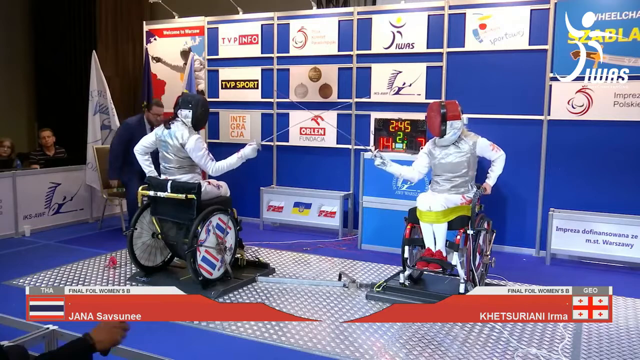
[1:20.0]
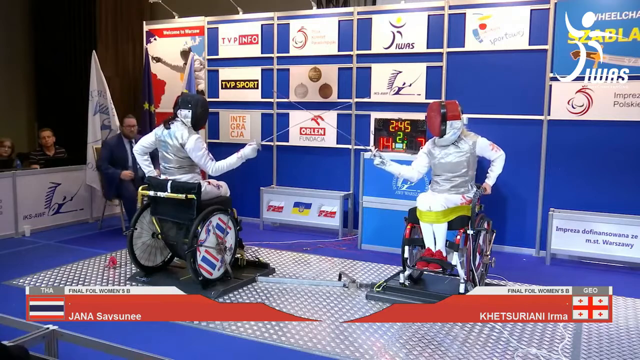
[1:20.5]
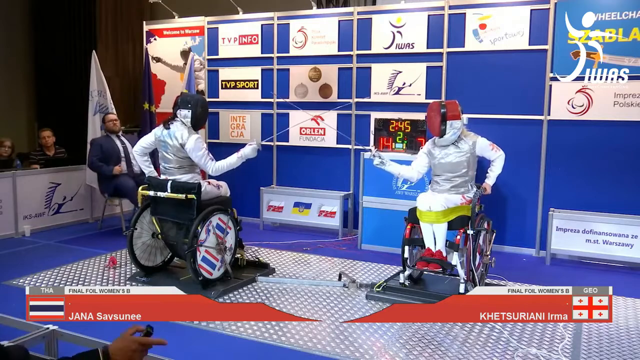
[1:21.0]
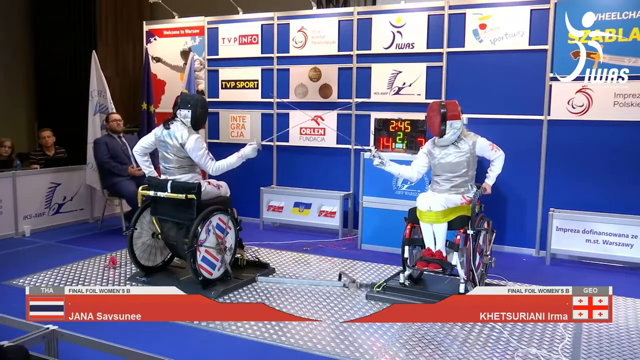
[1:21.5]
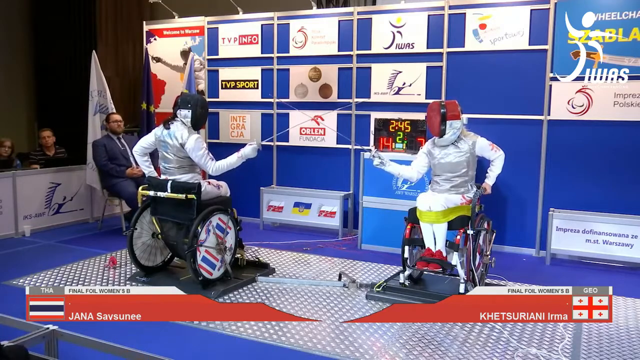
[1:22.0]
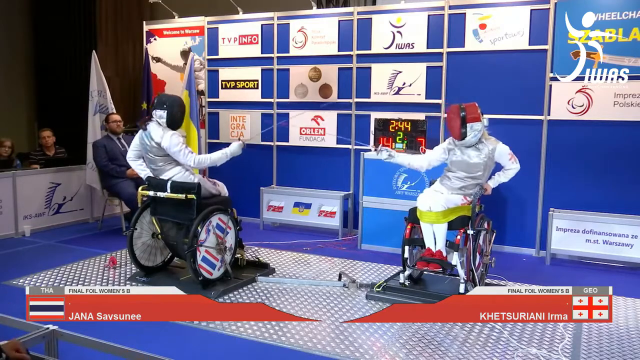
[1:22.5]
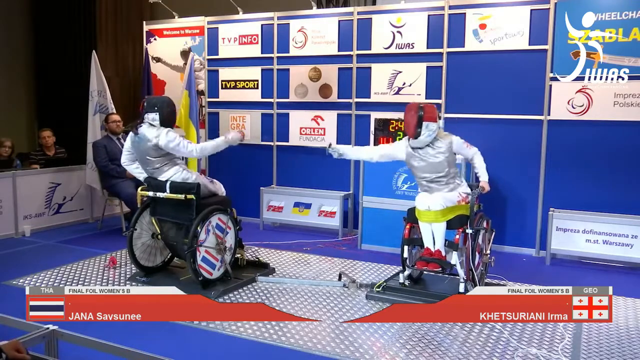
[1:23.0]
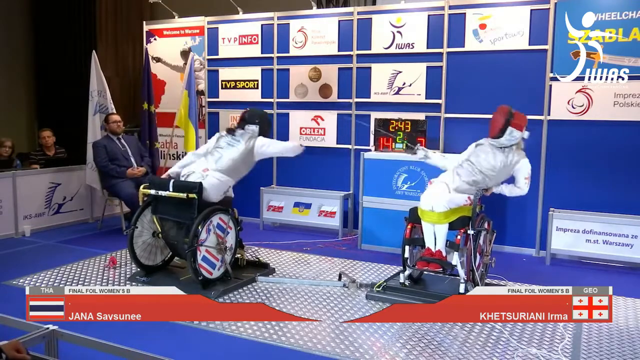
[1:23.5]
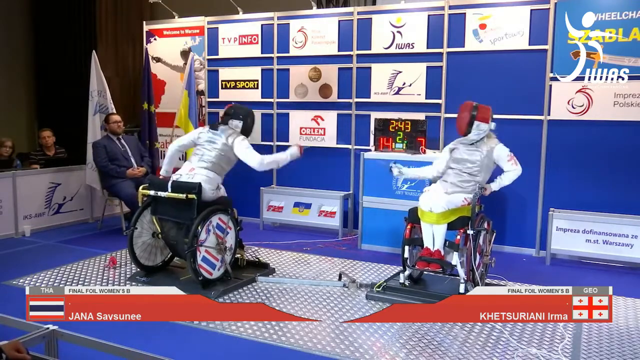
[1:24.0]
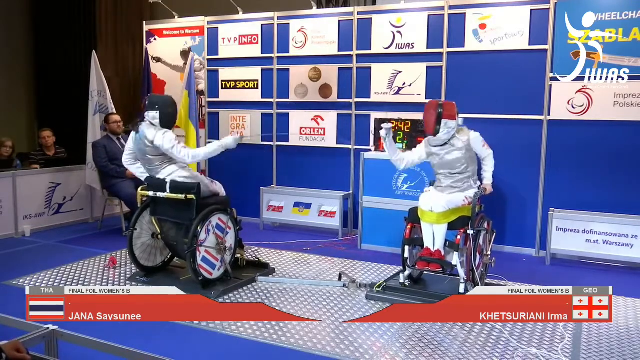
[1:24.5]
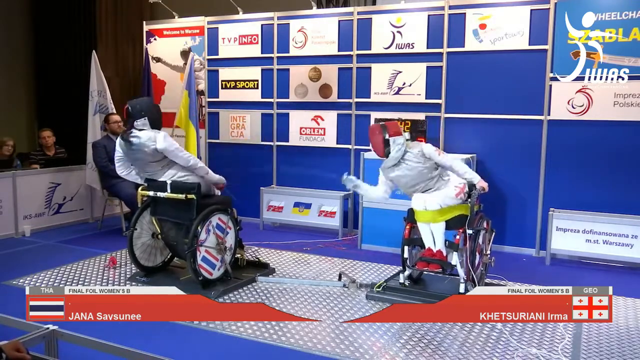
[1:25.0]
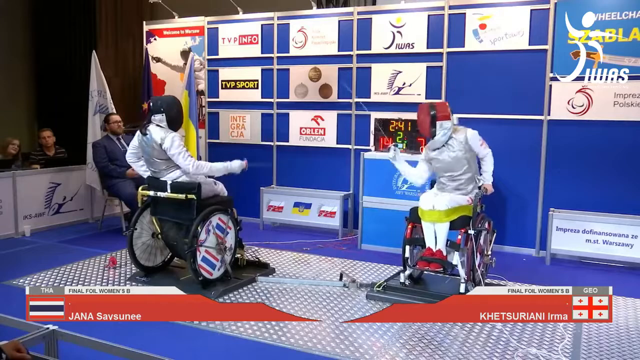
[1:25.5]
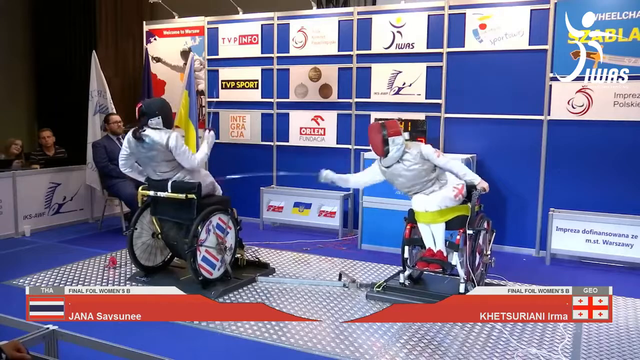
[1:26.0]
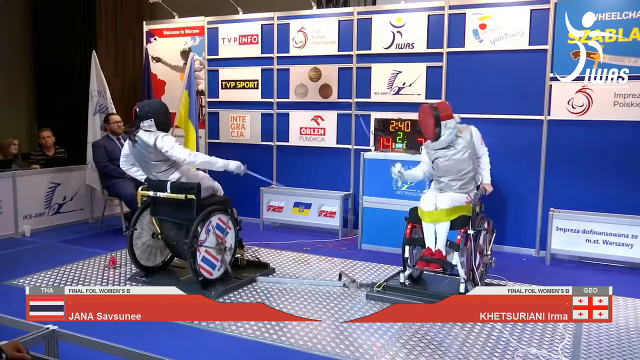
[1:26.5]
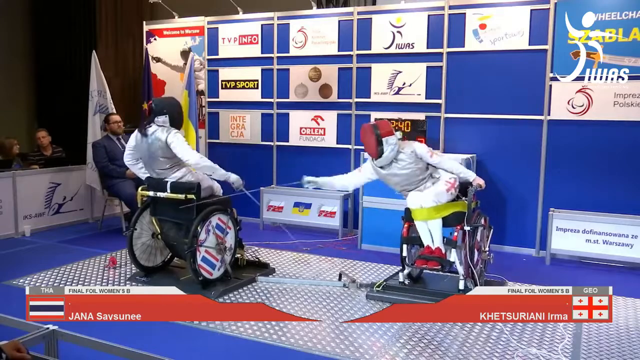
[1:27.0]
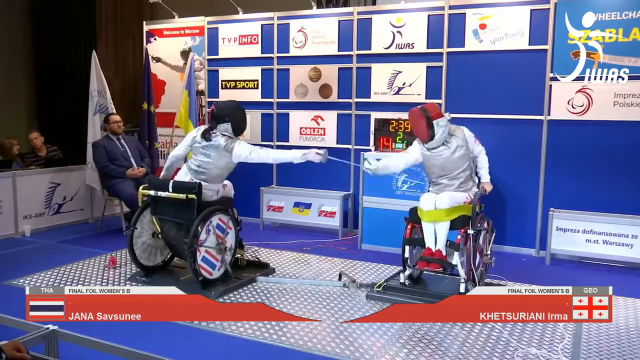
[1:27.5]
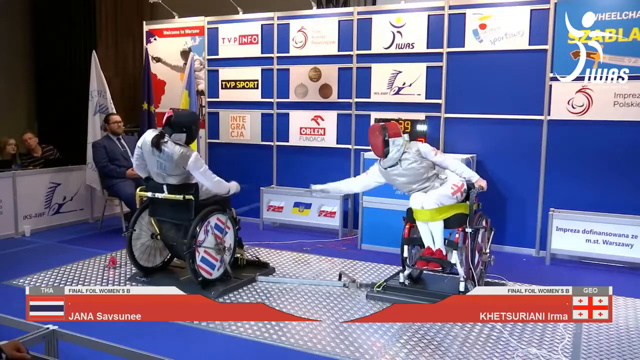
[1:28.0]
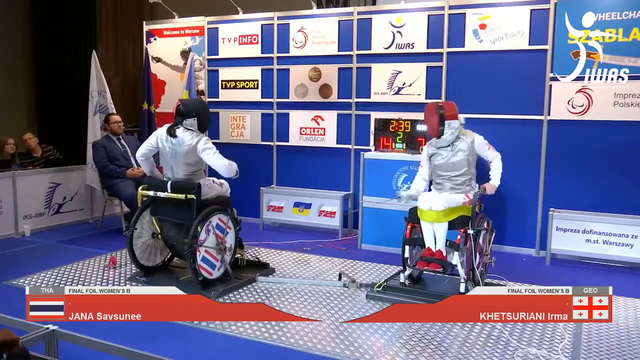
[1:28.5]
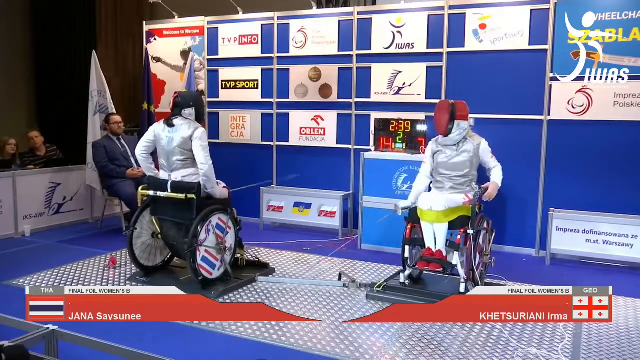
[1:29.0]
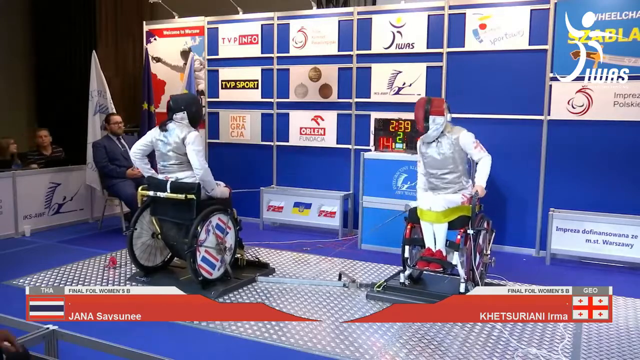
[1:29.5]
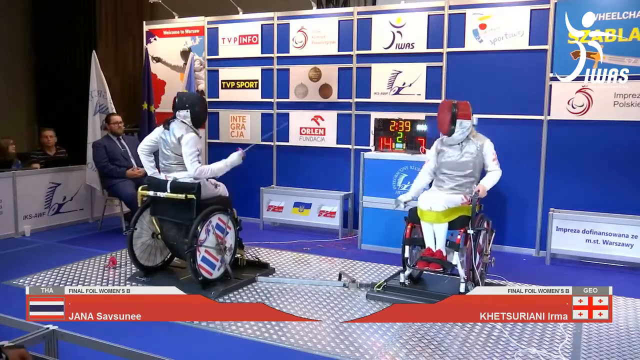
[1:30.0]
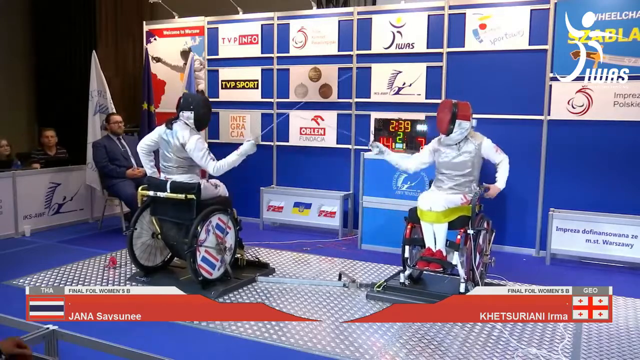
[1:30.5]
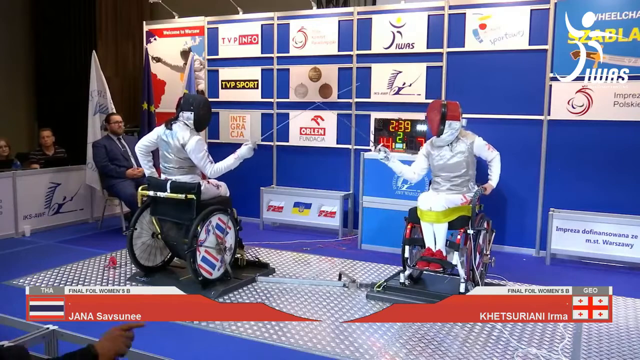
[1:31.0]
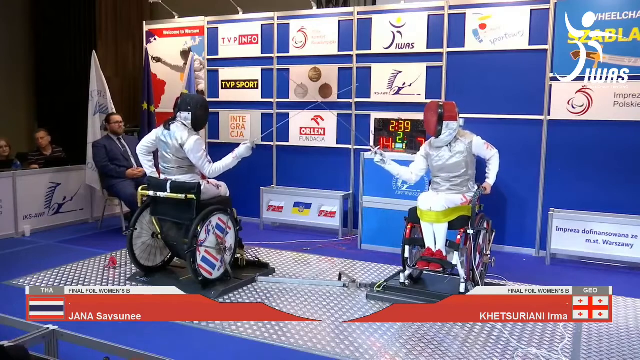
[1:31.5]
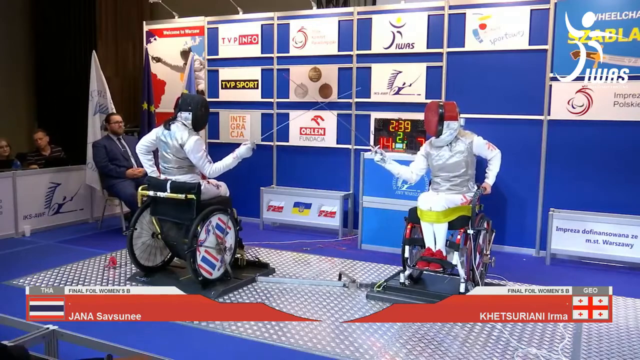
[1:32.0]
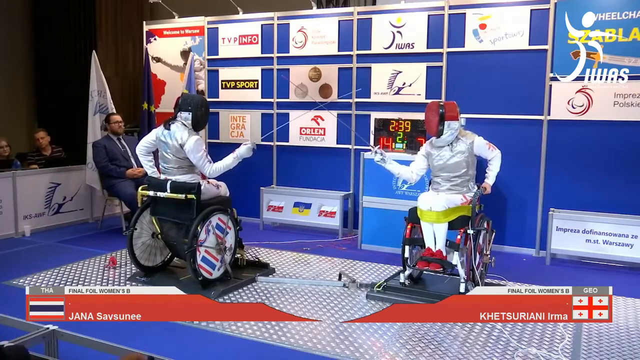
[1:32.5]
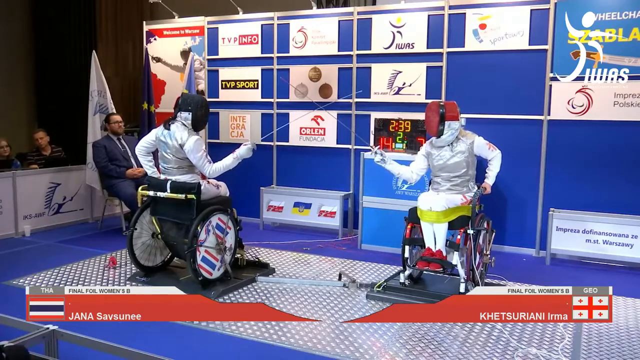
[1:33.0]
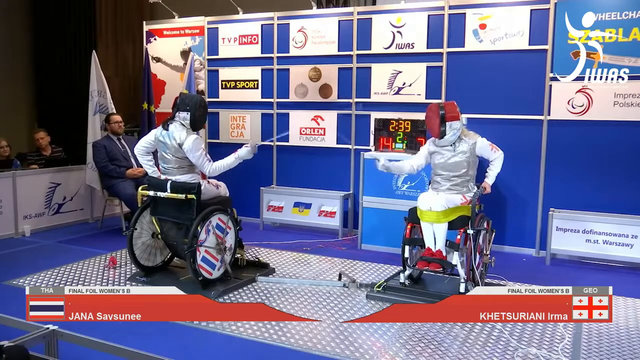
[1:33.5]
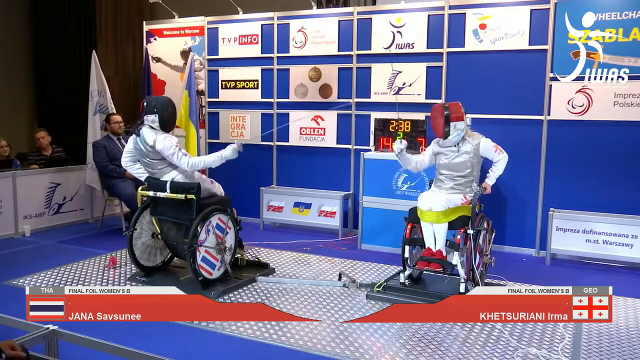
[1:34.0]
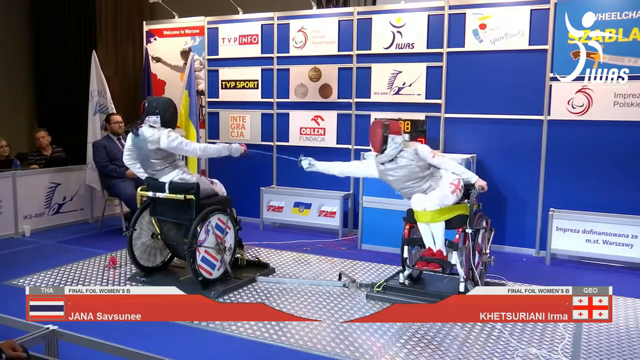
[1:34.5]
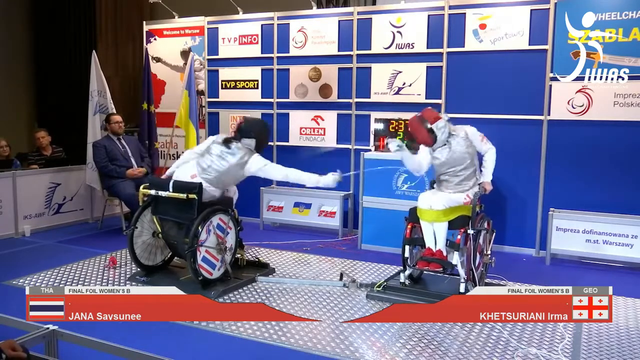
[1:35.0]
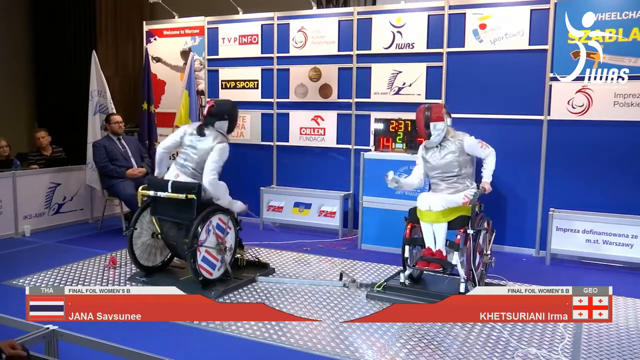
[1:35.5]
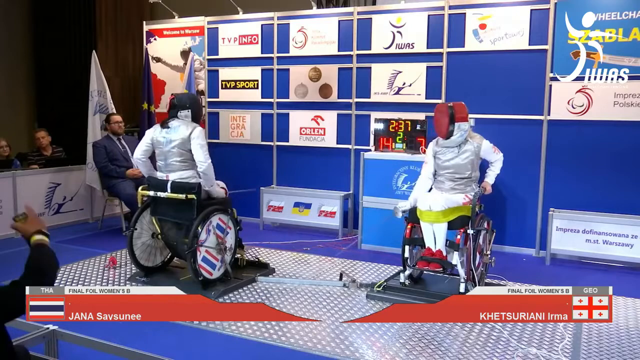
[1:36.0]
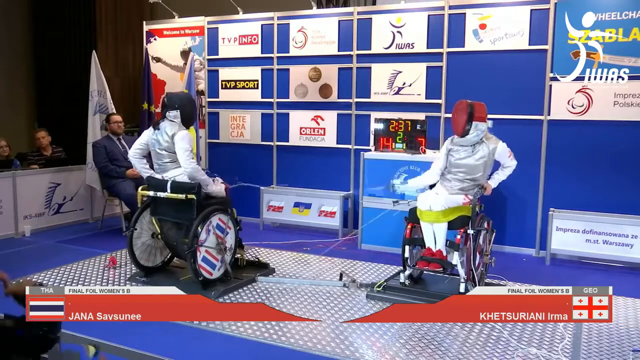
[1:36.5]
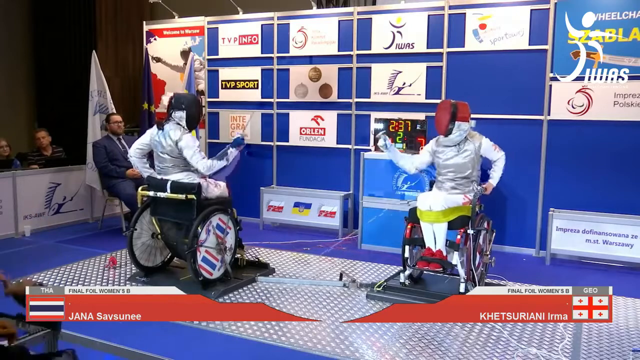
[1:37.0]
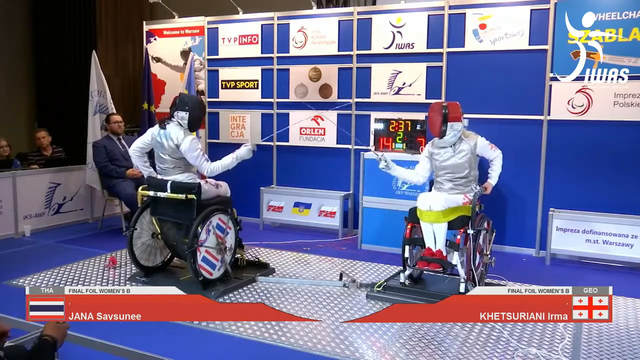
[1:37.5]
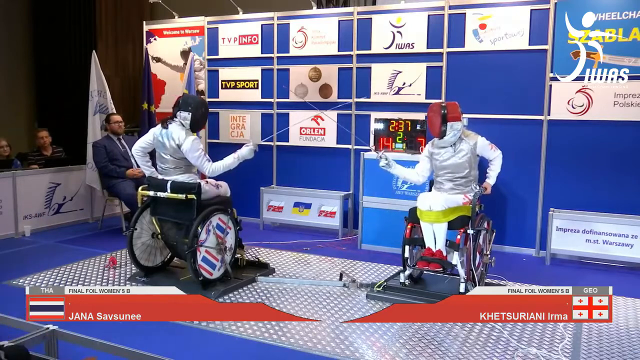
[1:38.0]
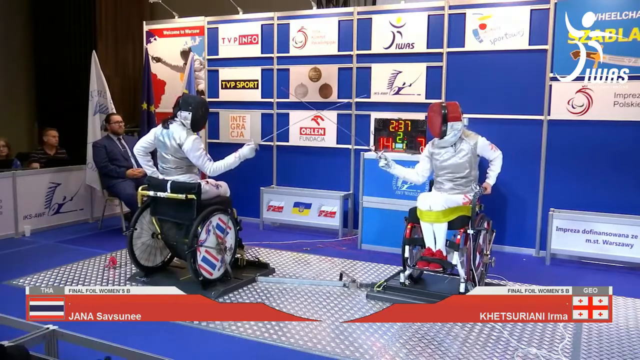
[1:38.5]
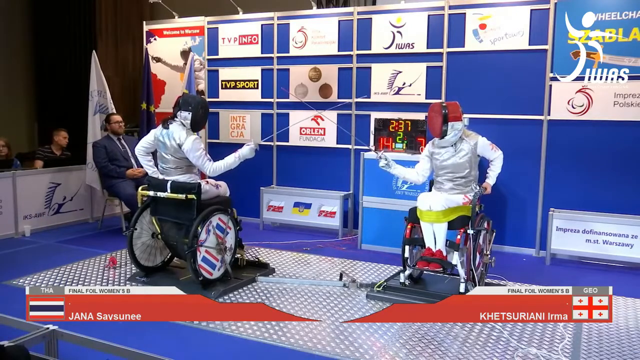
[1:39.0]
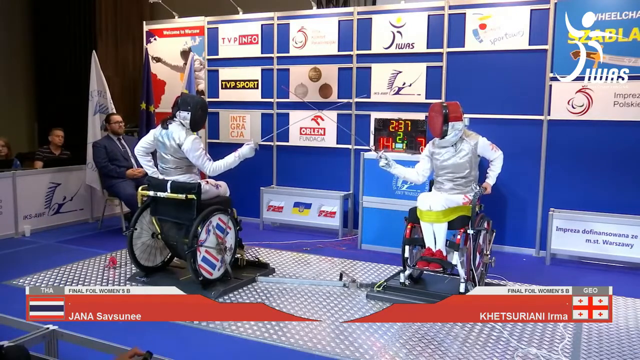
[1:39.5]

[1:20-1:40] The judge sits back down in the left corner, and the fencers continue to fight, going back and forth and swinging their swords very quickly. They reset, put their swords together, and start fighting again, then reset again and put their swords together in the X formation. The person on the right is very aggressive, lunging forward to attack, while the person on the left mostly plays defense. The two people in the stands at the far left, a man and a woman, continue watching; they are the only two spectators visible. The scoreboard in the background to the right still reads 14 to 7, and its timer shows 2 minutes and 45 seconds.